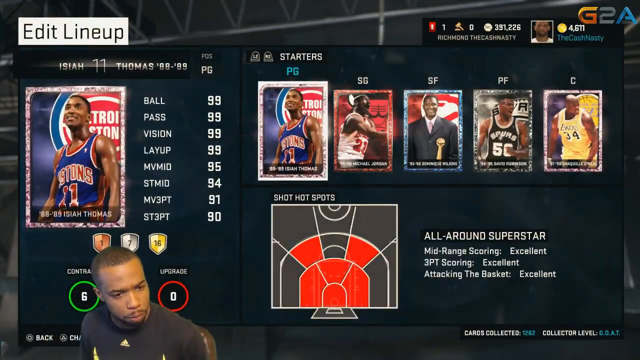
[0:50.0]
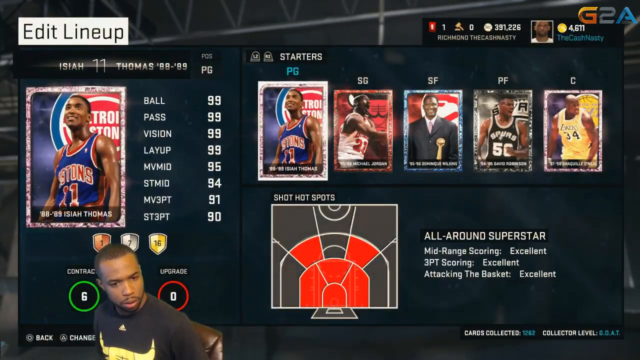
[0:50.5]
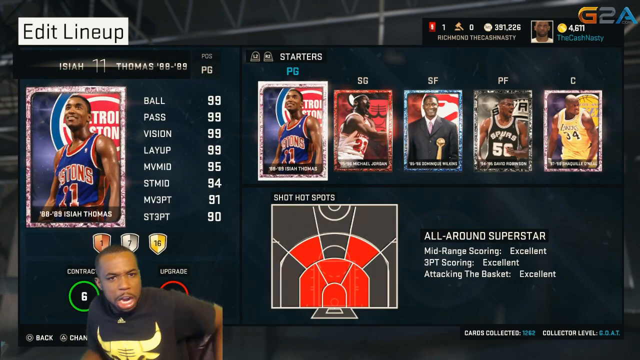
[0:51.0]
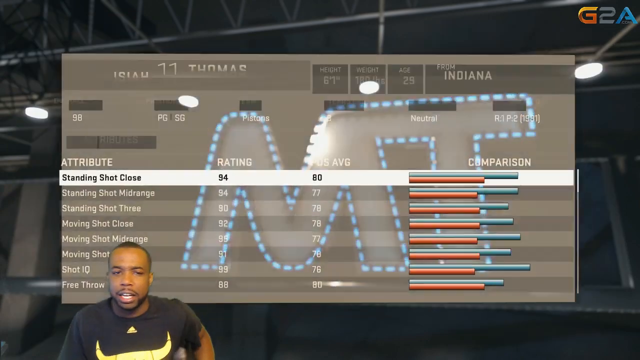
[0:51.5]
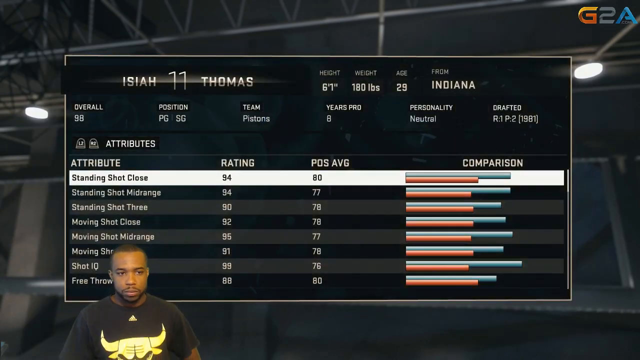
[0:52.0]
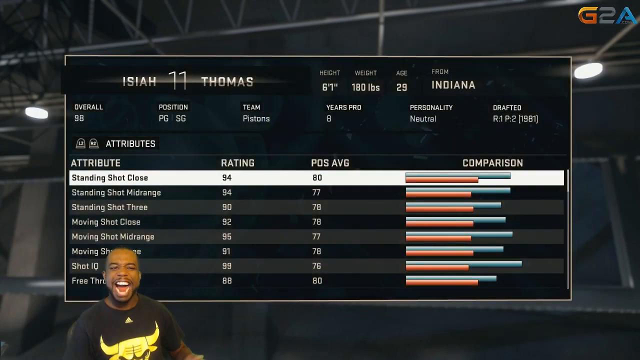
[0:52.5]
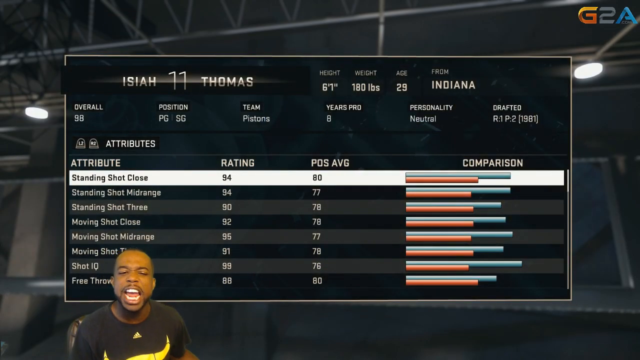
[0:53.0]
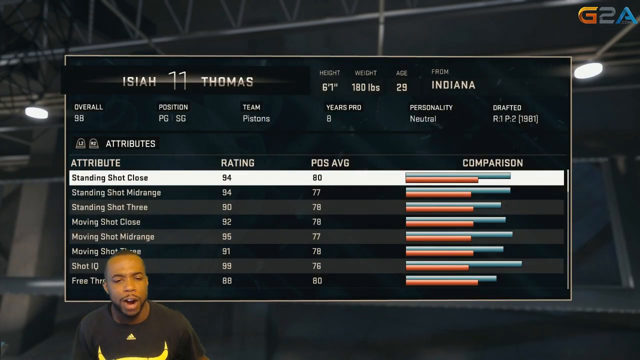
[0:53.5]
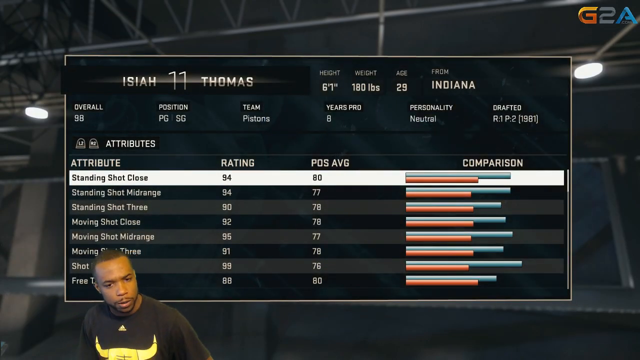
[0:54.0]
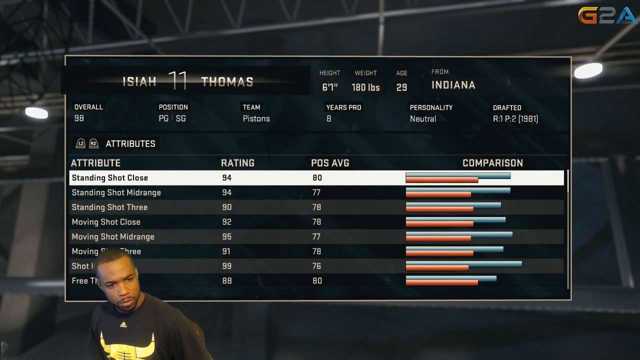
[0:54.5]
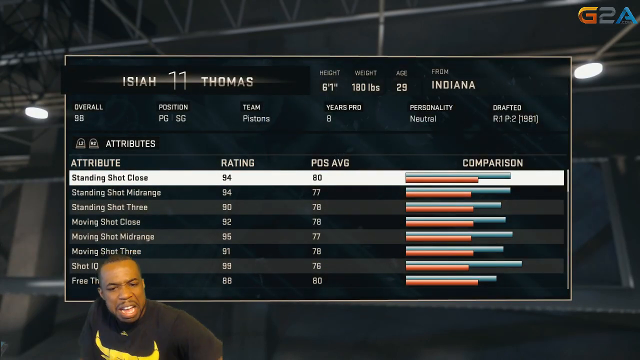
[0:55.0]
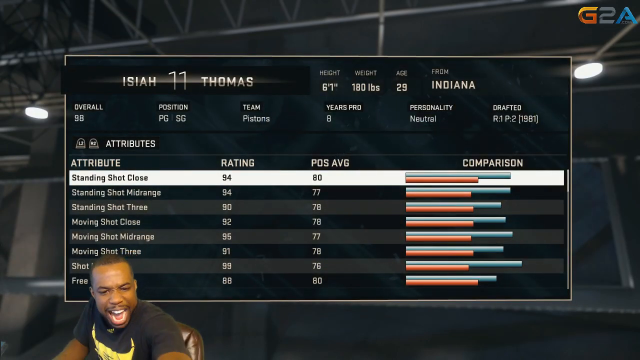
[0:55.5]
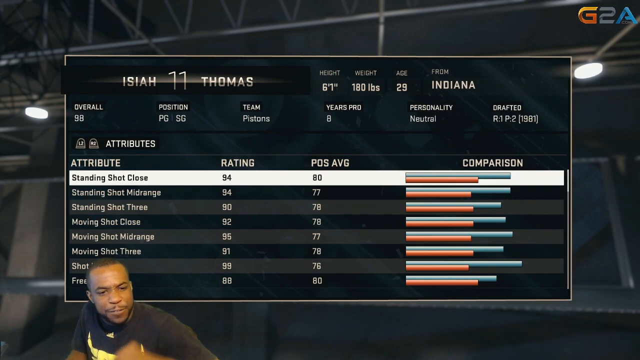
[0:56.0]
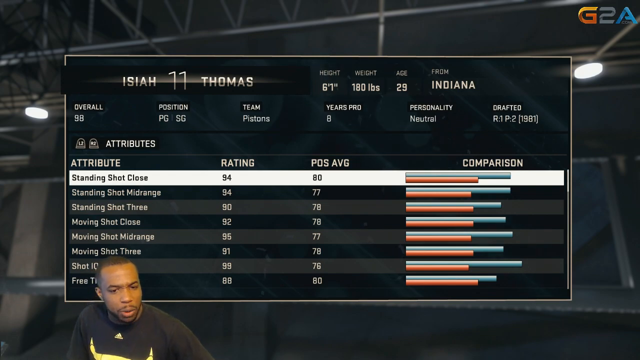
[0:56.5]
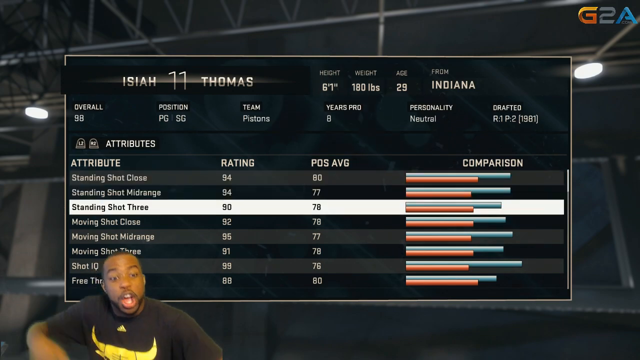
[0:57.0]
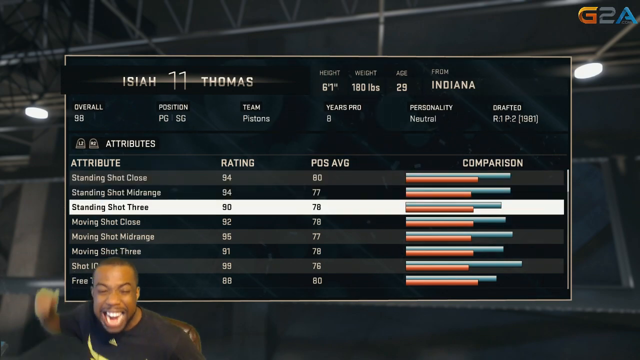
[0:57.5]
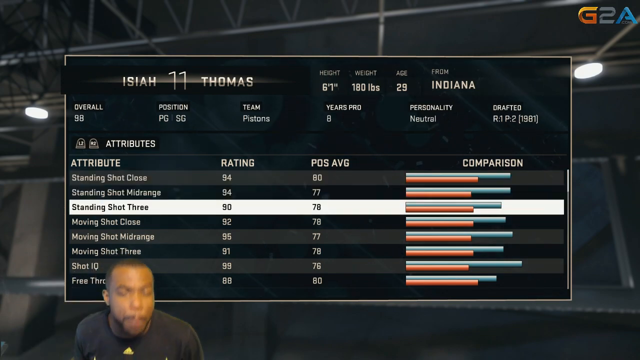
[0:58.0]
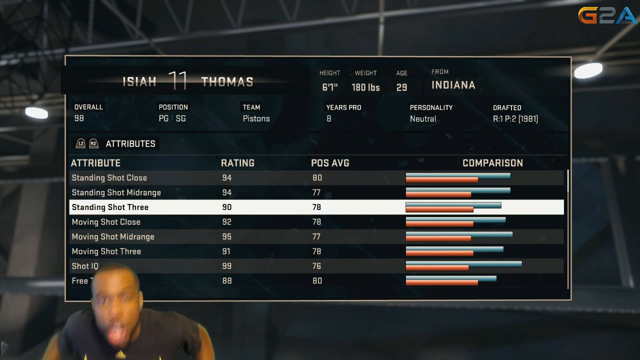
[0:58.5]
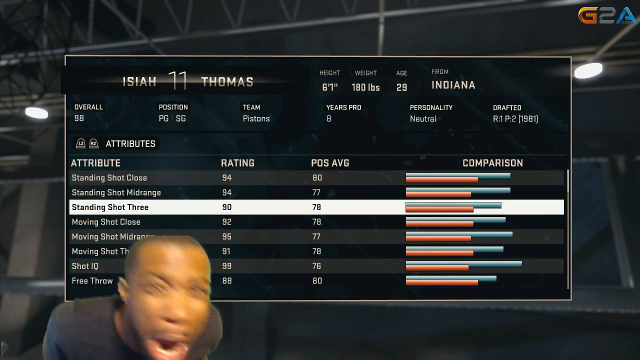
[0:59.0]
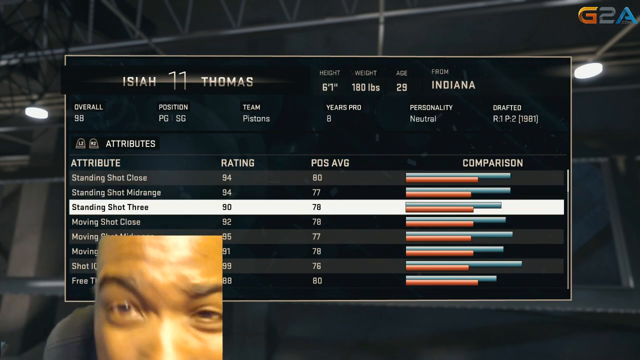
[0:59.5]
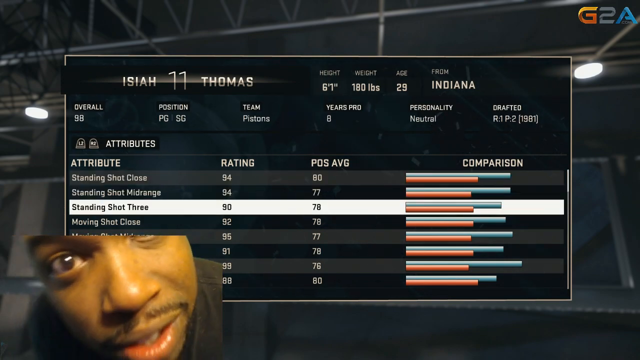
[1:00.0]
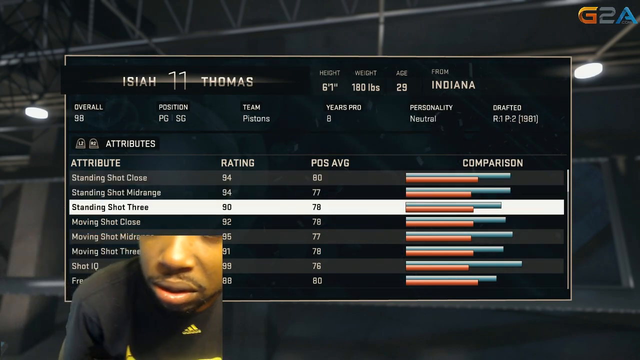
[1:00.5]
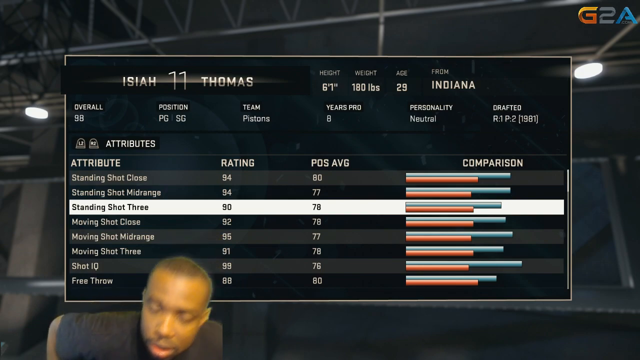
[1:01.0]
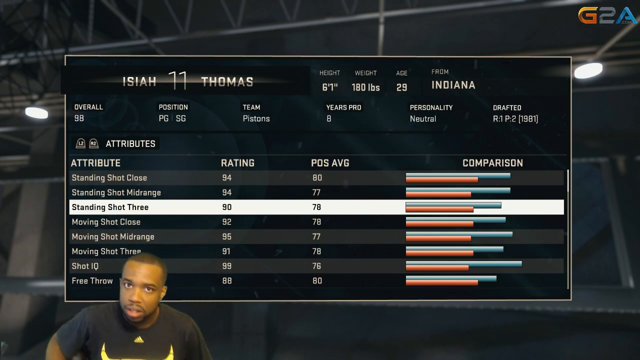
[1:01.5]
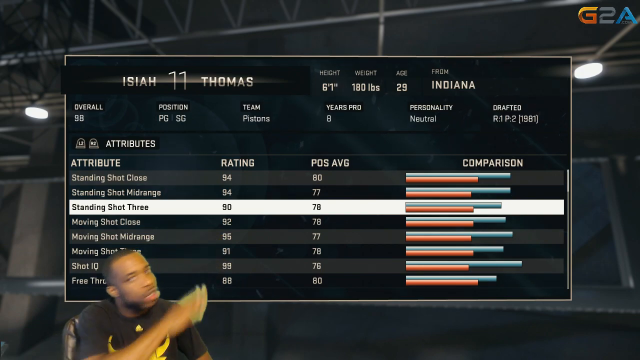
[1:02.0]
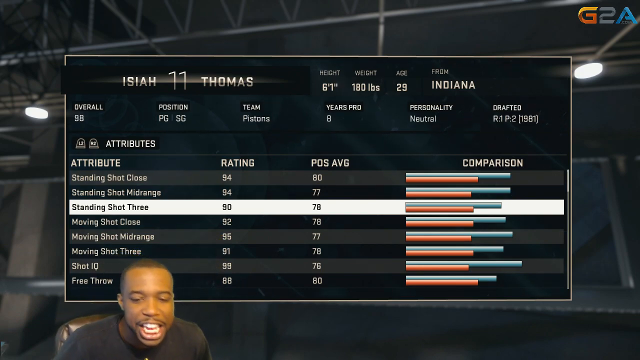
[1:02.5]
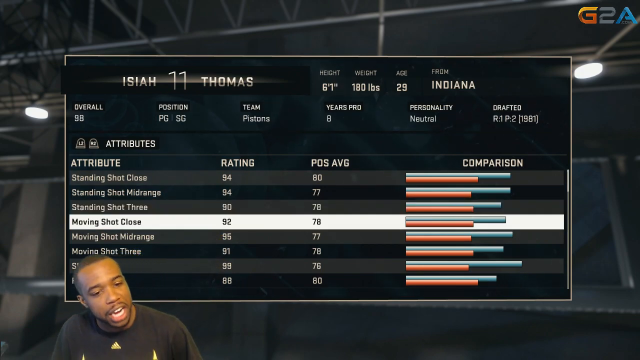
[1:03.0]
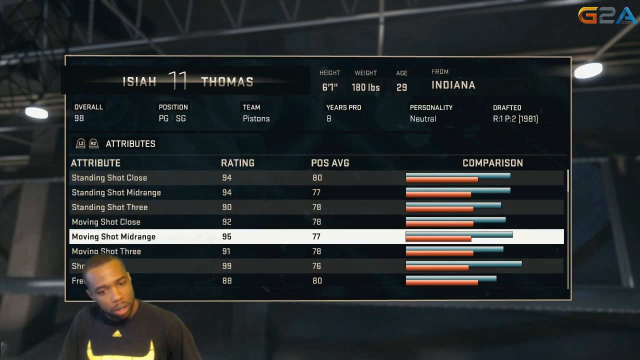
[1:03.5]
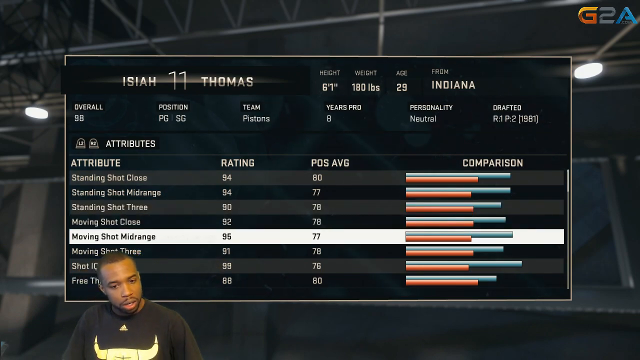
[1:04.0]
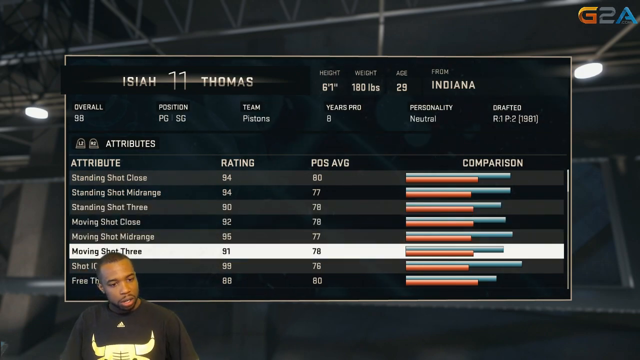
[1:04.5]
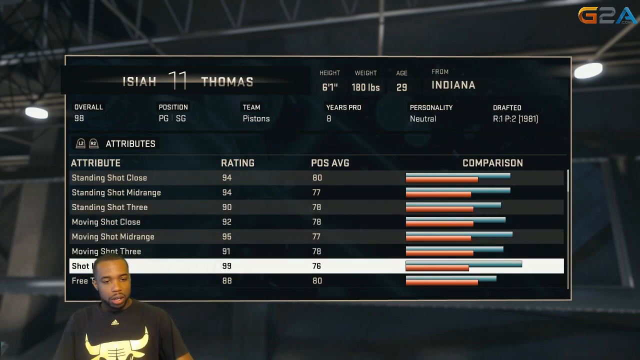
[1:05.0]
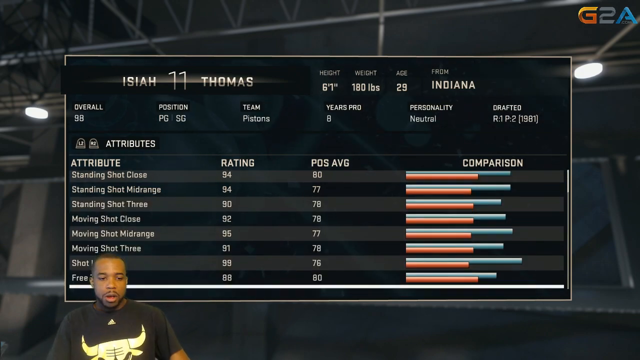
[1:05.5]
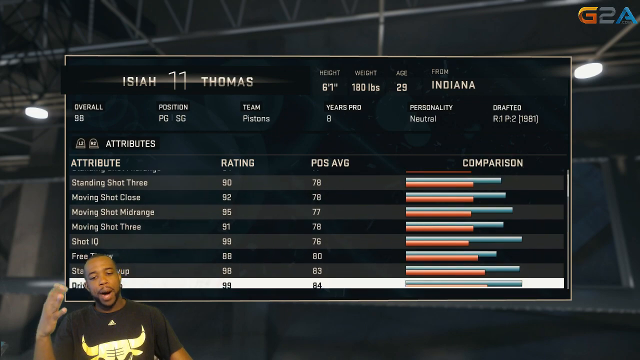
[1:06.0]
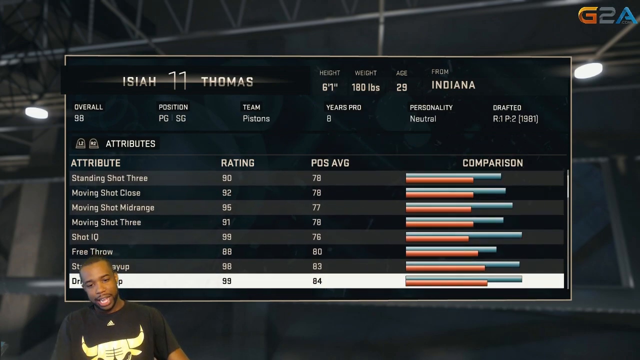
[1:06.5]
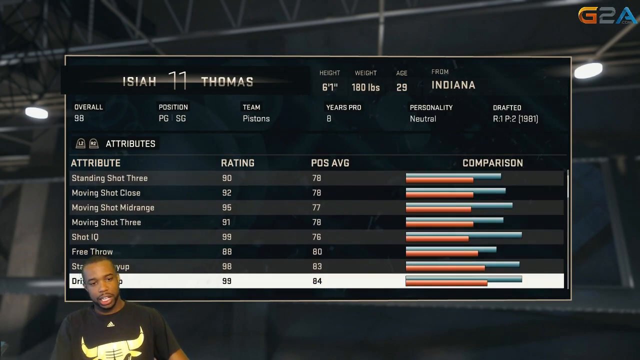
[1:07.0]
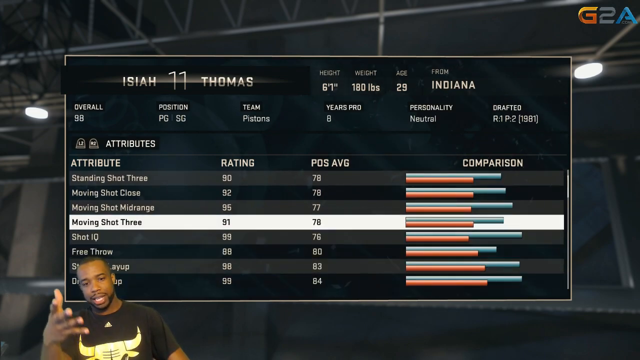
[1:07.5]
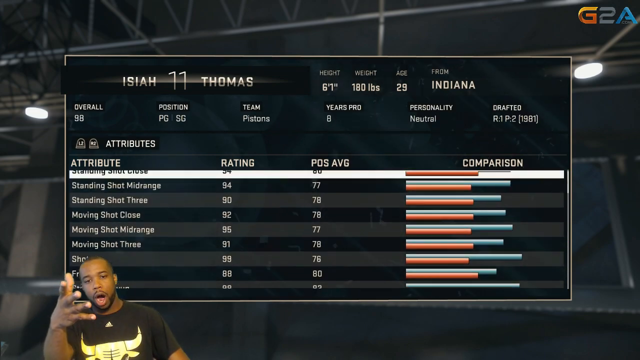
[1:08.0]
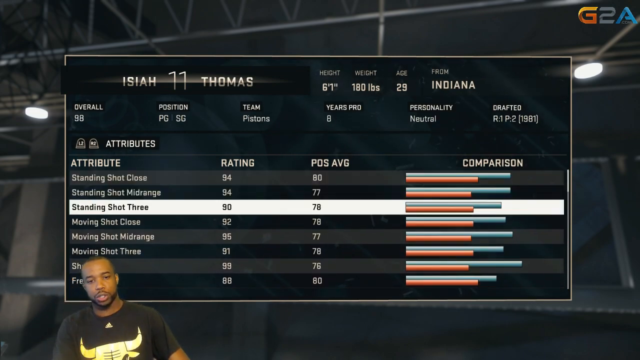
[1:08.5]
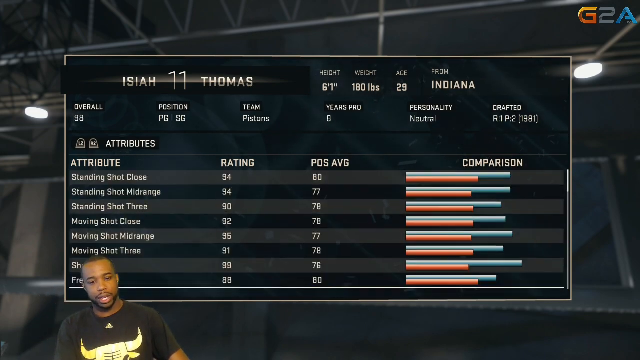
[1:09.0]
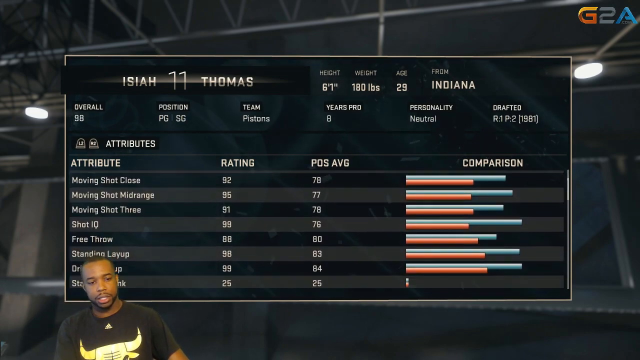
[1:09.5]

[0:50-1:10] Five trading cards for NBA players appear in the top portion of the screen. From left to right they are point guard Isaiah Thomas, shooting guard Michael Jordan, strong forward Dominique Williams, power forward David Robinson, and center New York Lakers number 34, Shaquille O'Neal. The man continues to shout into the camera from the lower left as the statistics for number 11, Isaiah Thomas, appear. The biometric data lists him at 6 foot 1 inches tall, 180 pounds, age 29, and an alumnus of Indiana University. The man keeps speaking while Thomas' statistics are shown, including standing shot 3, moving shot close, moving shot mid-range, moving shot 3 and shot IQ.